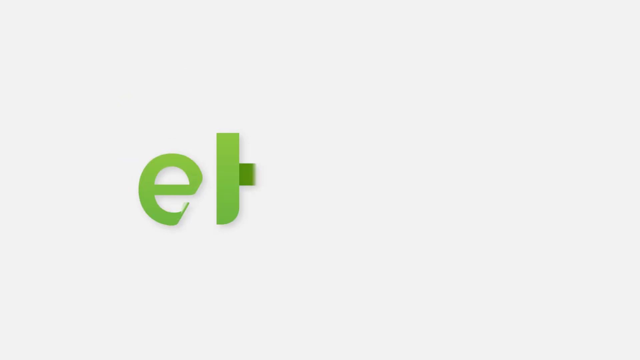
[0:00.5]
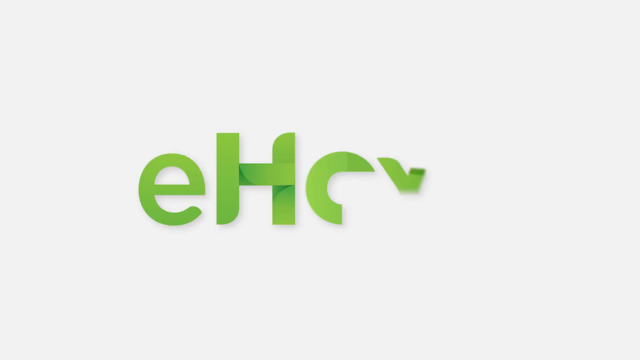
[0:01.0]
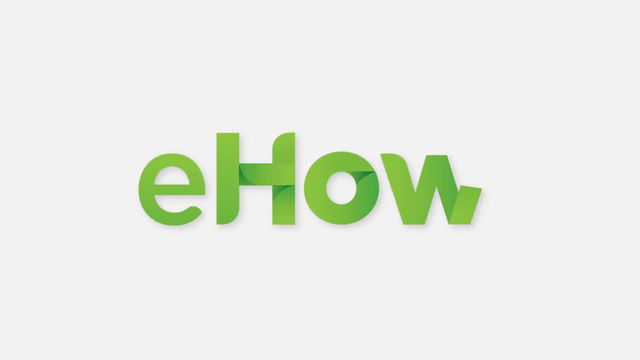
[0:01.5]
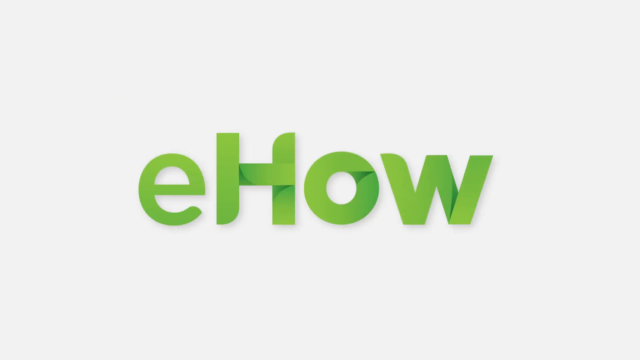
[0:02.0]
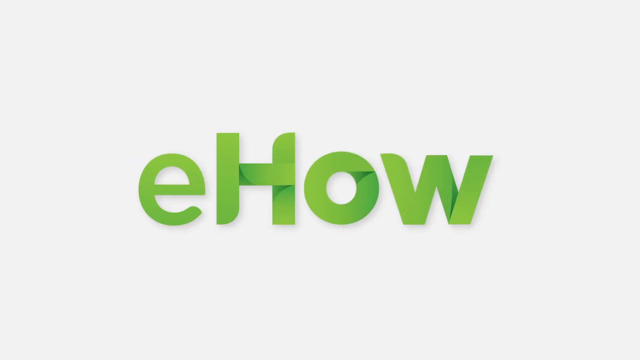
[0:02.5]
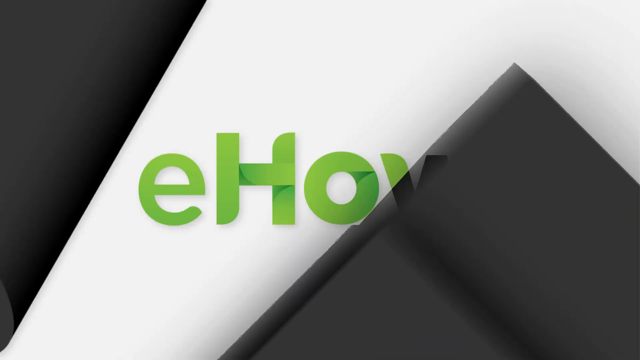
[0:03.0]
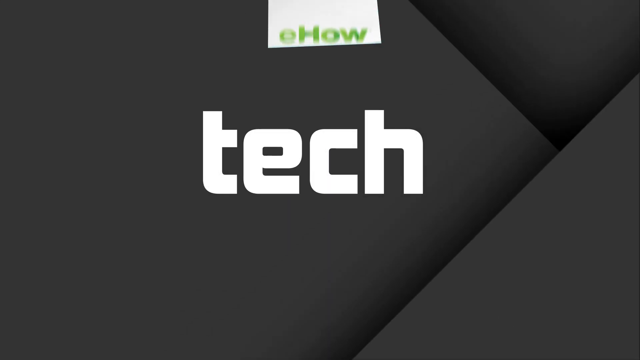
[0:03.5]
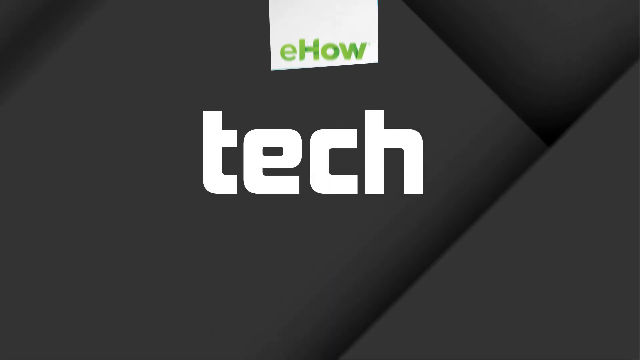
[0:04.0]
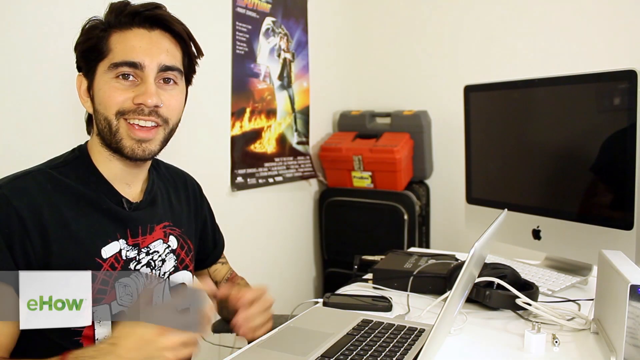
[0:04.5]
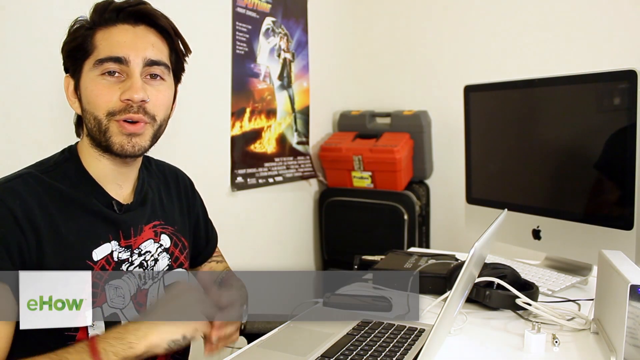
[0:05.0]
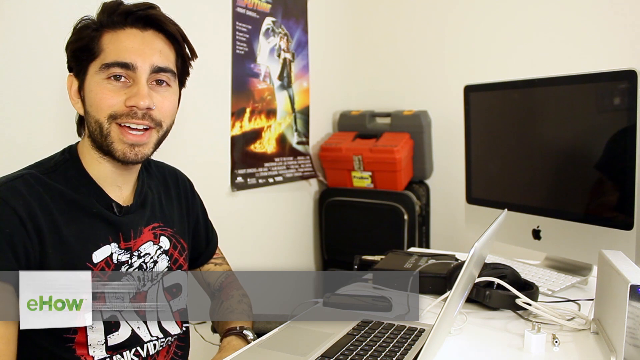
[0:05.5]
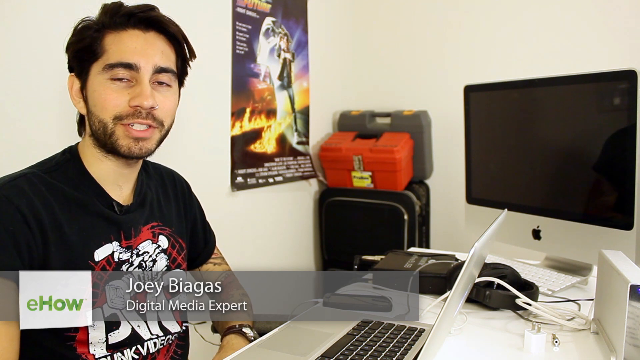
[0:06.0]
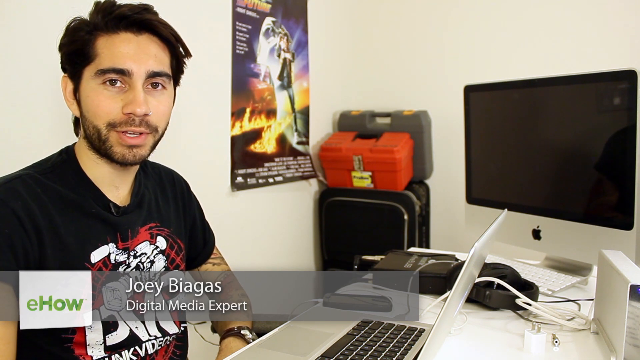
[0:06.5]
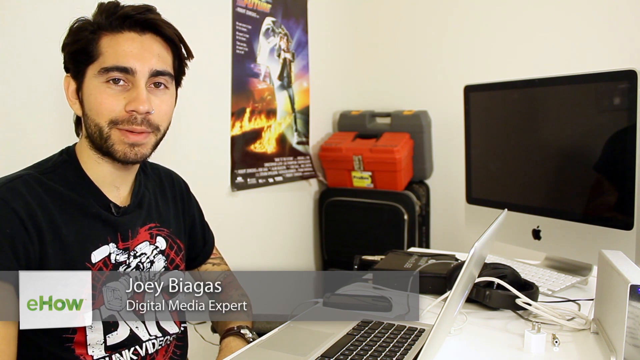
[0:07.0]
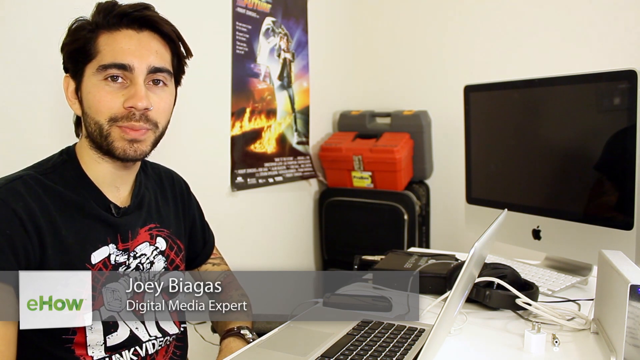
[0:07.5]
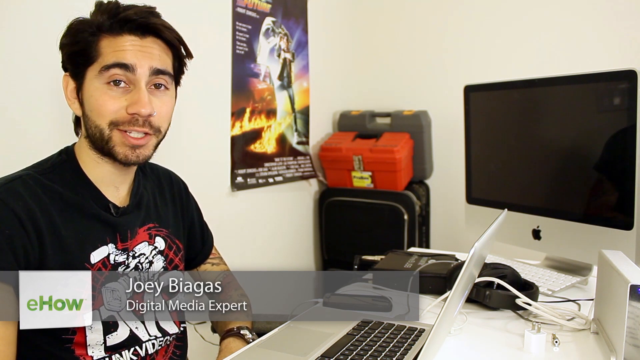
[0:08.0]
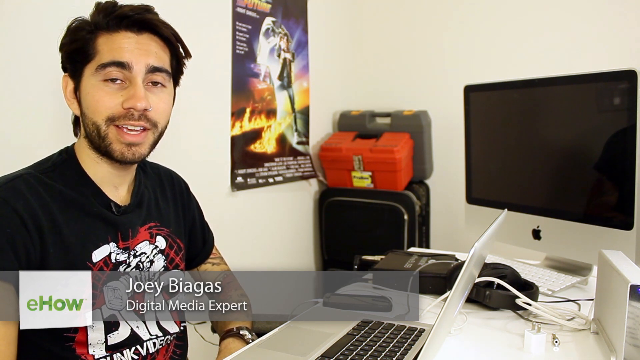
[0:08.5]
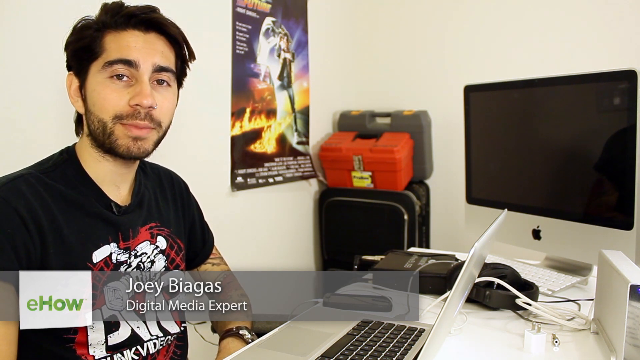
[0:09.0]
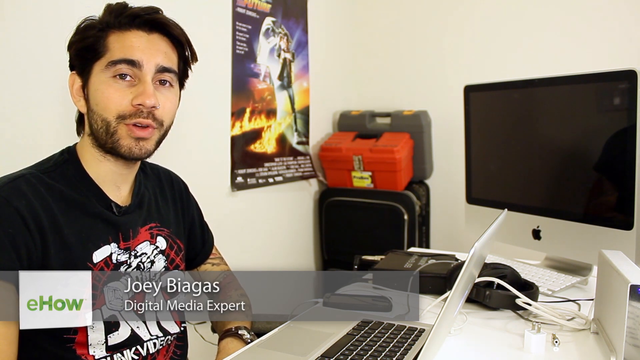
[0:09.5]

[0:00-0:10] A man who looks like someone named Joey Villagas appears in a tech video about transferring pictures and videos, basically media files, from an iPhone to a laptop, mostly as a form of backup to sync the files. He is sitting in what looks like a workstation with a computer monitor screen and a laptop, and the iPhone is connected to the laptop. There is a toolbox, and a poster is on the wall.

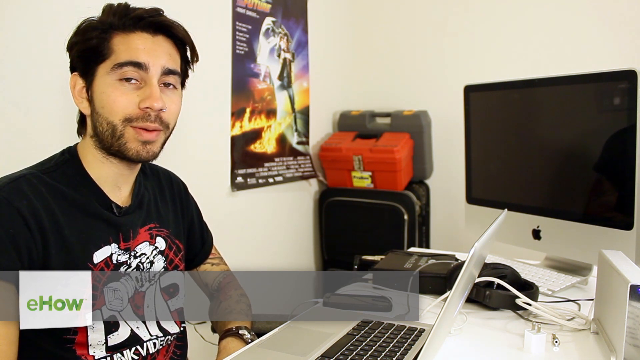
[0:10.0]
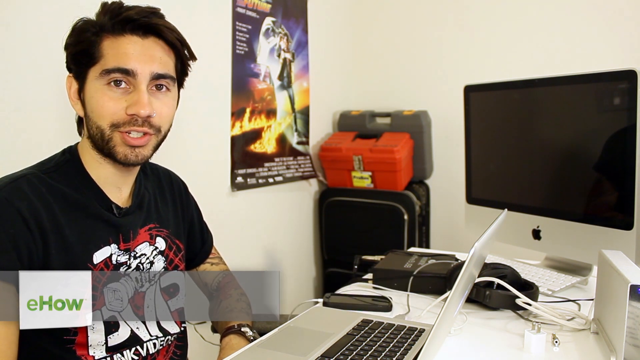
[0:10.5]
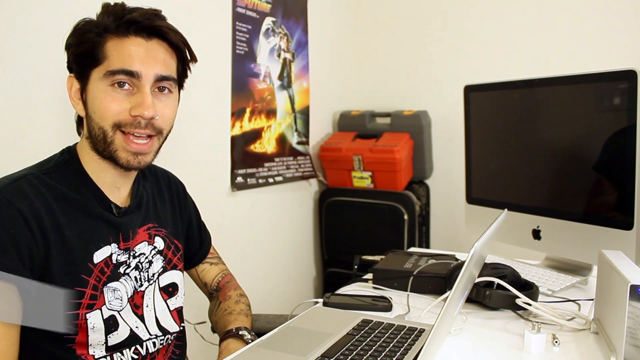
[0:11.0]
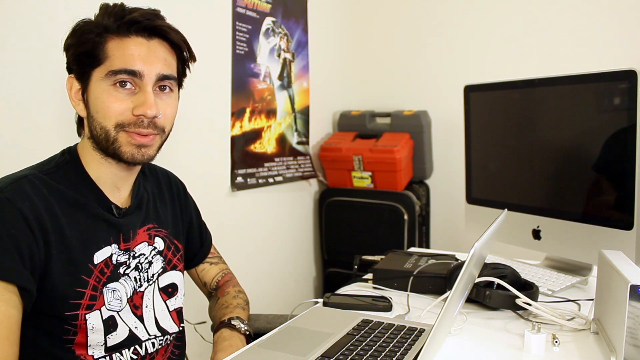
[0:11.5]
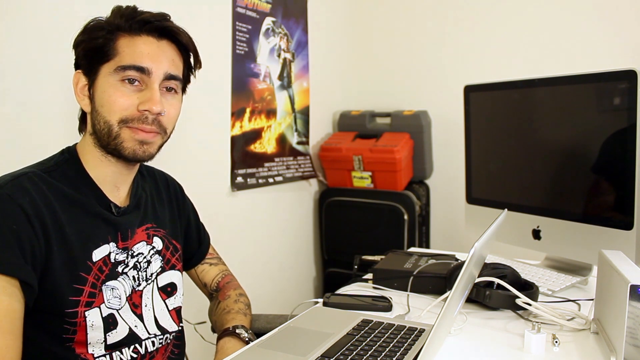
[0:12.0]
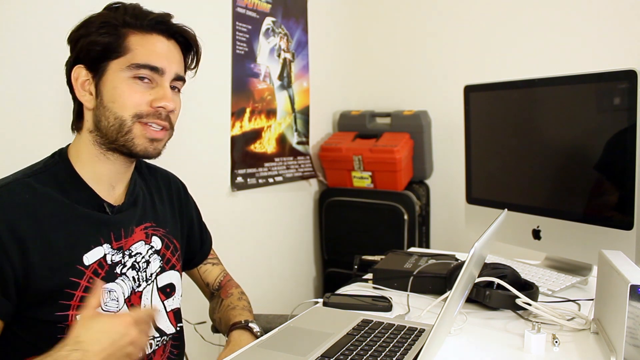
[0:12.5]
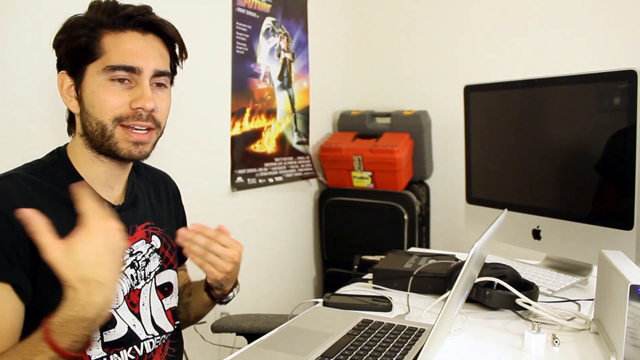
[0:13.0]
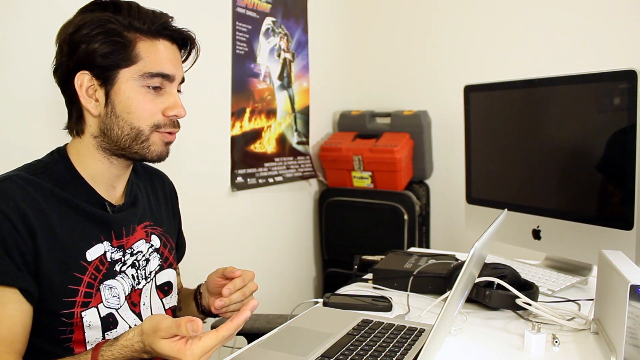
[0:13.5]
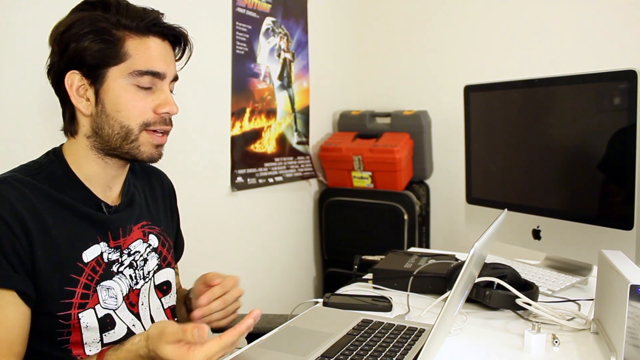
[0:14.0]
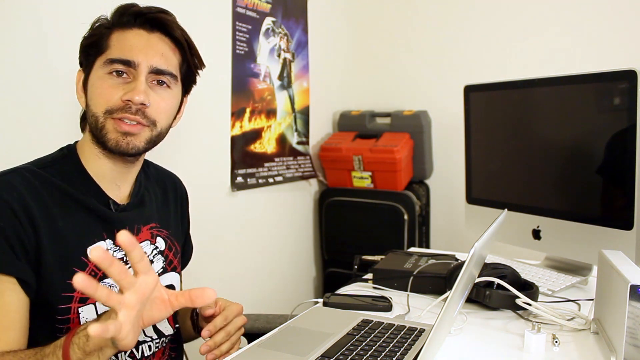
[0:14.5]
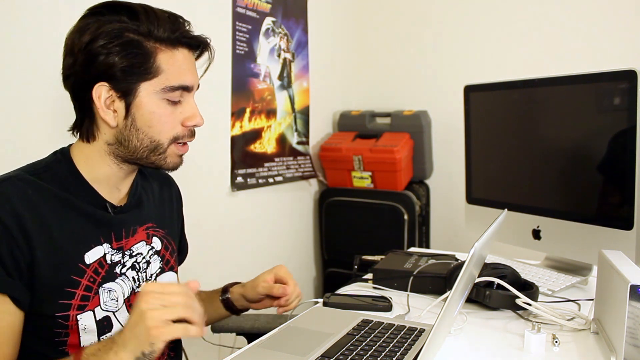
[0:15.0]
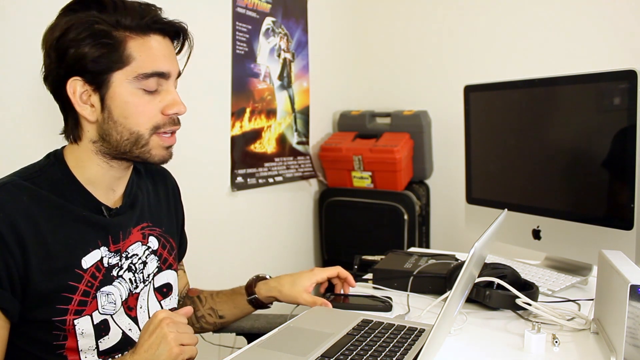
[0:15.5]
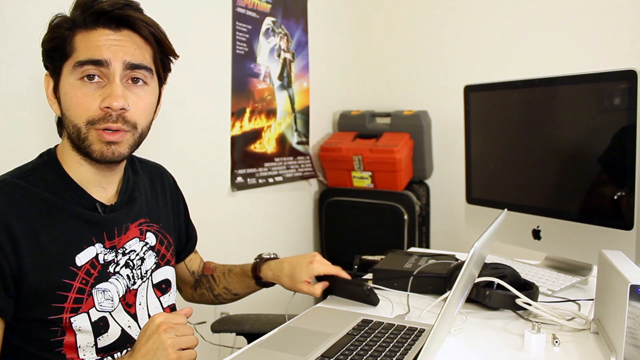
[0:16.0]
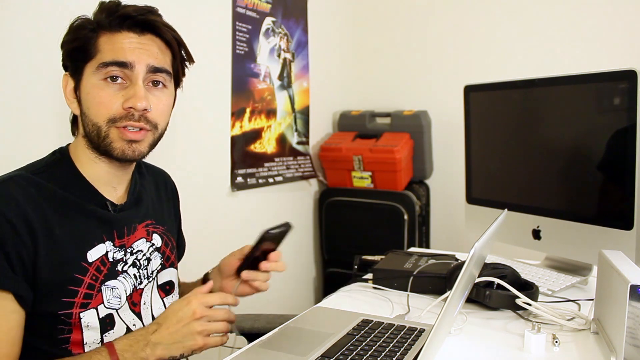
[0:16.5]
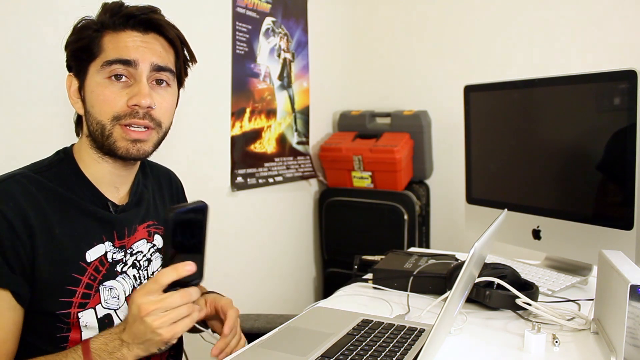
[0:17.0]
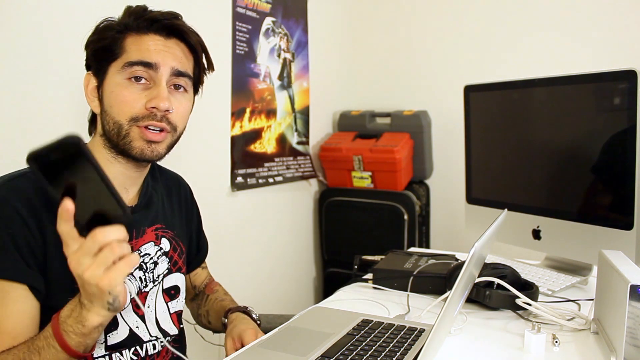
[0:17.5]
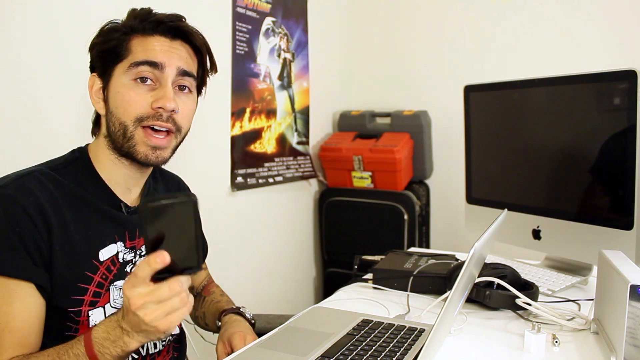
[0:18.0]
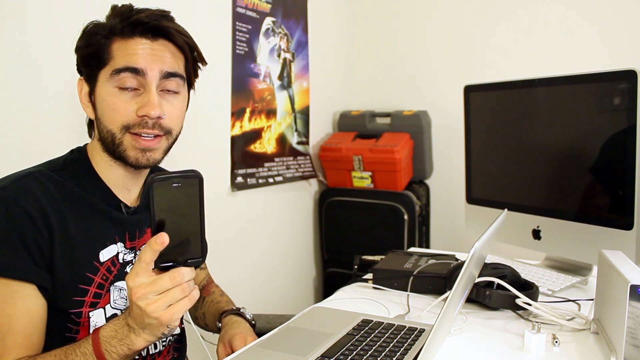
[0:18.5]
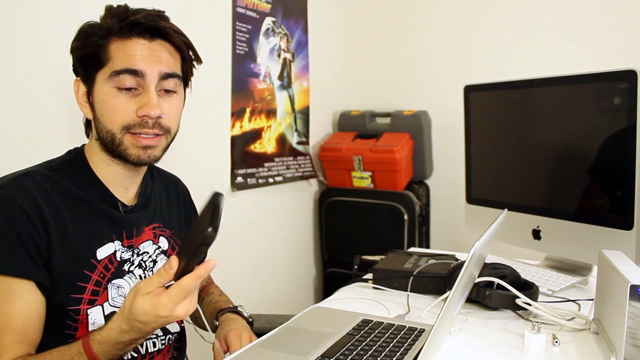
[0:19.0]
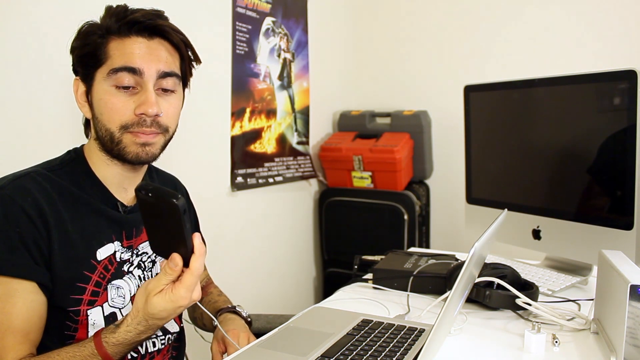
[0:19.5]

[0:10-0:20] He is still looking at the phone. He wears a black shirt and holds a black phone, showing the viewers what the phone looks like from the back and the front. He seems to have sideburns. At the end, a page appears that seems to be eHOW.